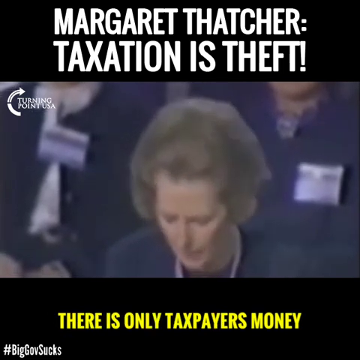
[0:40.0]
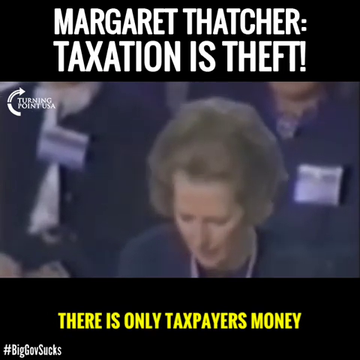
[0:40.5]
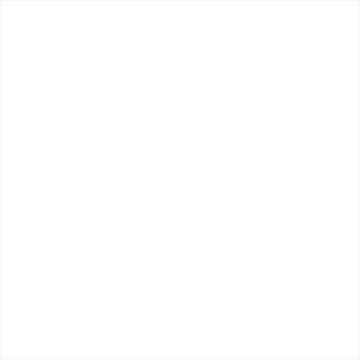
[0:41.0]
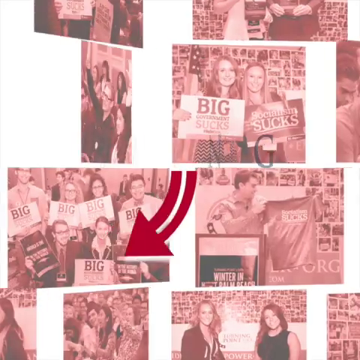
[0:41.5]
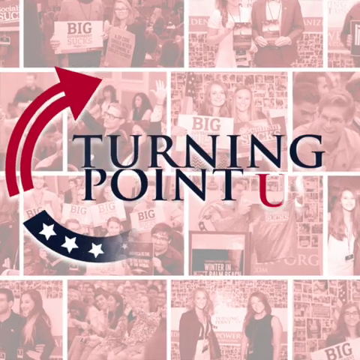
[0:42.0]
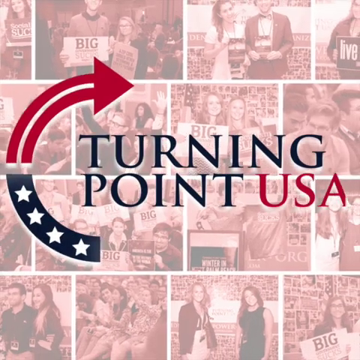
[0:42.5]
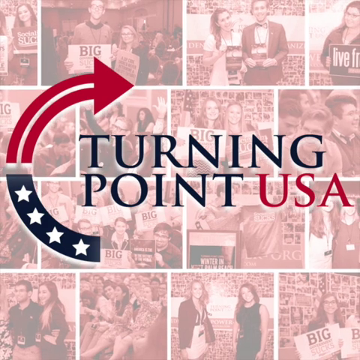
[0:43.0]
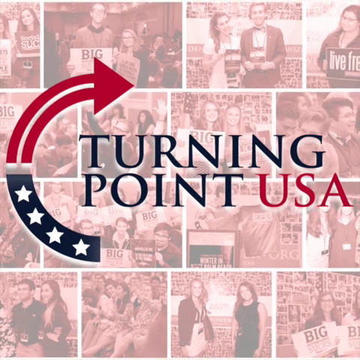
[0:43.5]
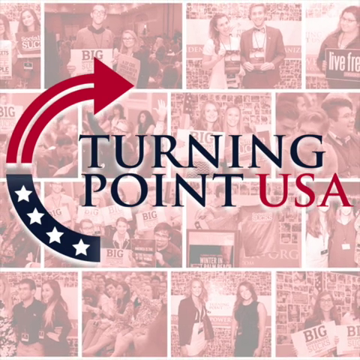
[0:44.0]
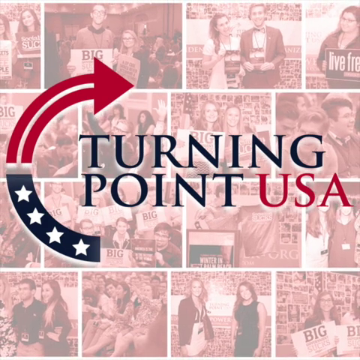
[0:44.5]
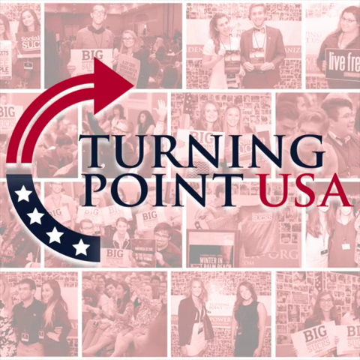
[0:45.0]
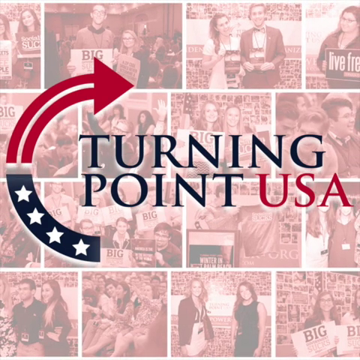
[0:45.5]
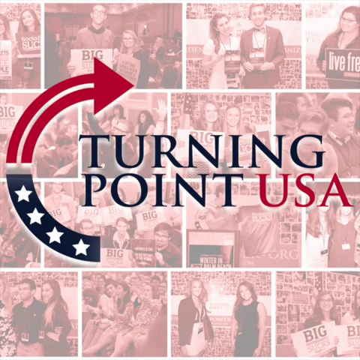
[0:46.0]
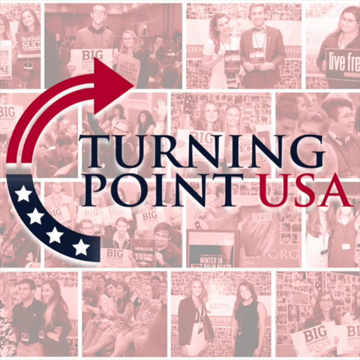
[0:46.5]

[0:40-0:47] The screen reads "Margaret Thatcher, taxation is theft." A woman with brown hair and a dark top is at the center of a video playing, with some people behind her; she appears as if she could be sitting. Text briefly reads "there is only taxpayers' money." The video then changes to another screen that says "Turning Point USA." Various pictures fill the background, showing people posing with others and holding up signs that look like they could possibly be political signs, in red, white, and blue. An arrow starts as a blue background with white stars and then transitions into a red arrow with a circular element.